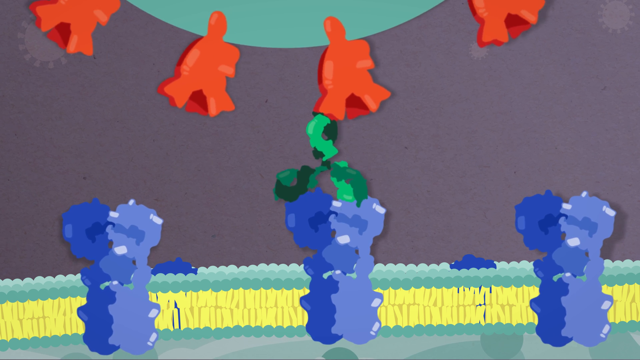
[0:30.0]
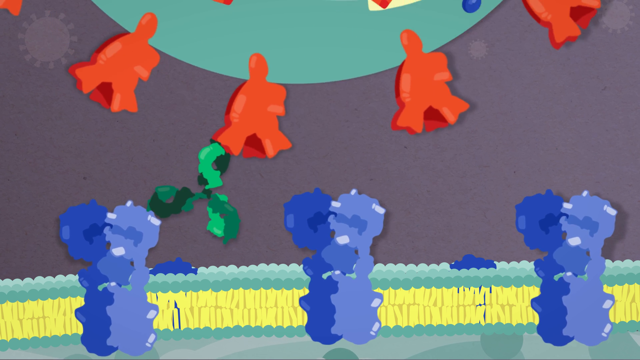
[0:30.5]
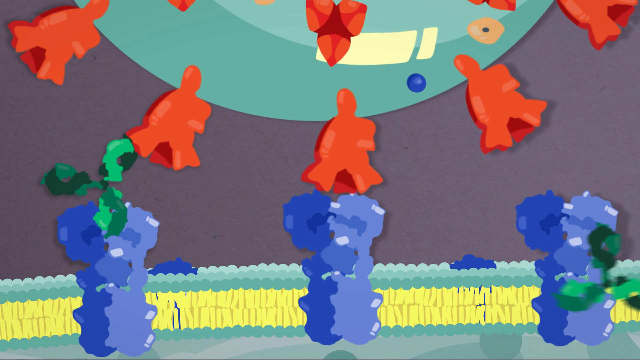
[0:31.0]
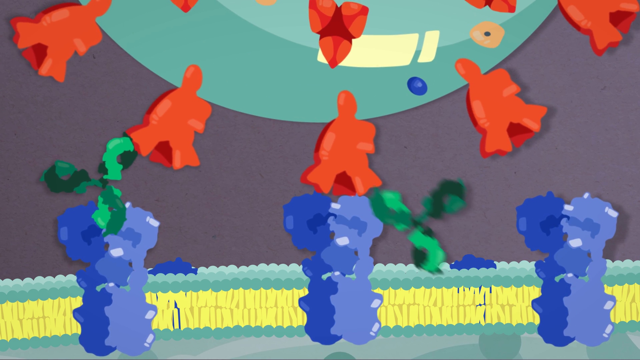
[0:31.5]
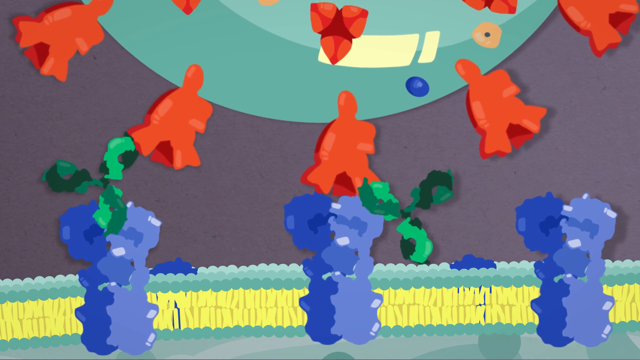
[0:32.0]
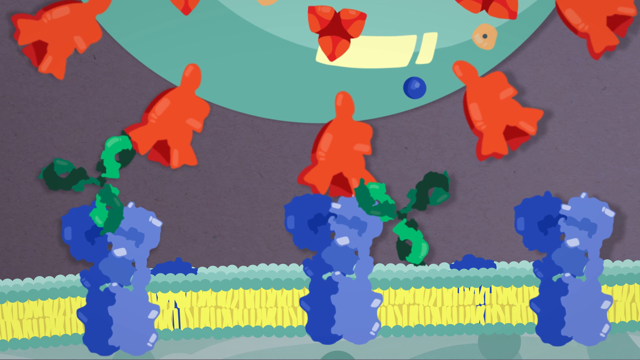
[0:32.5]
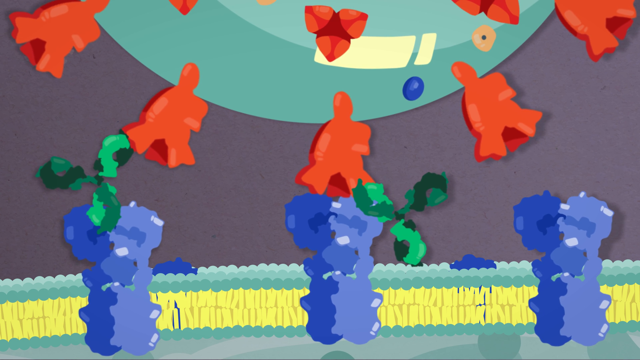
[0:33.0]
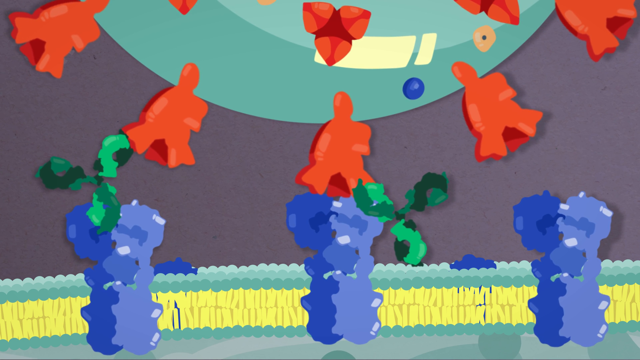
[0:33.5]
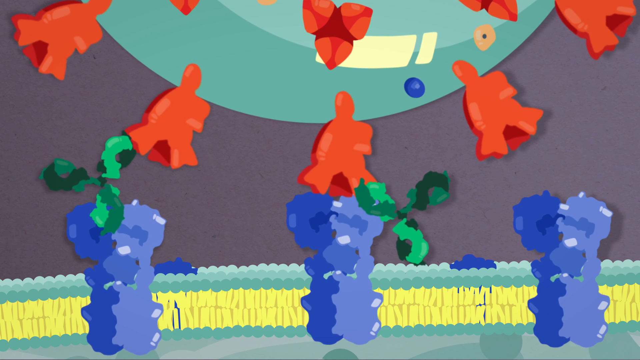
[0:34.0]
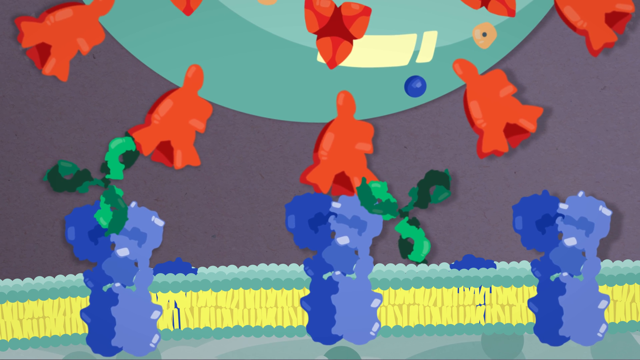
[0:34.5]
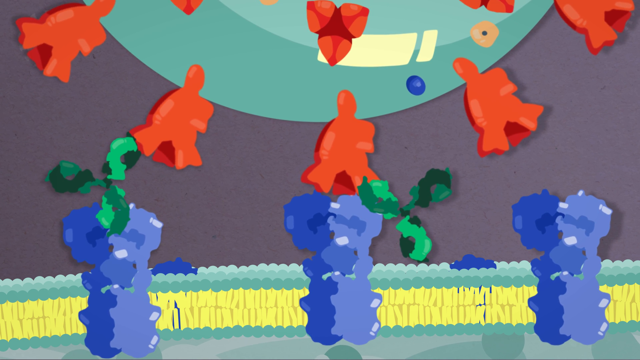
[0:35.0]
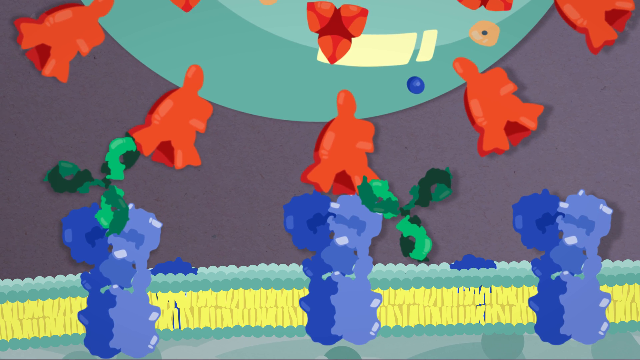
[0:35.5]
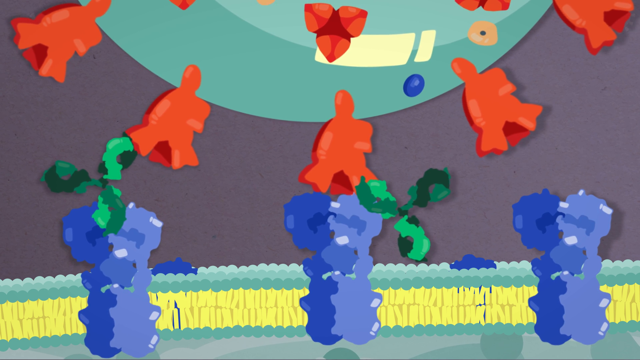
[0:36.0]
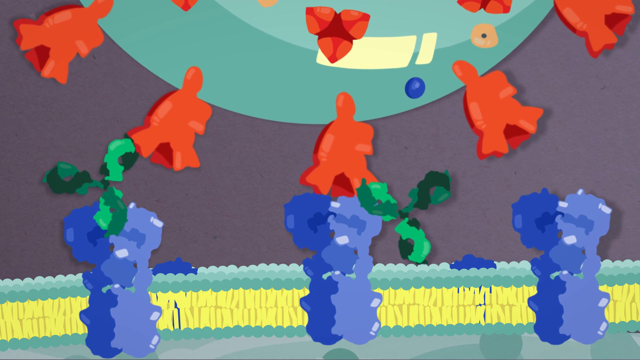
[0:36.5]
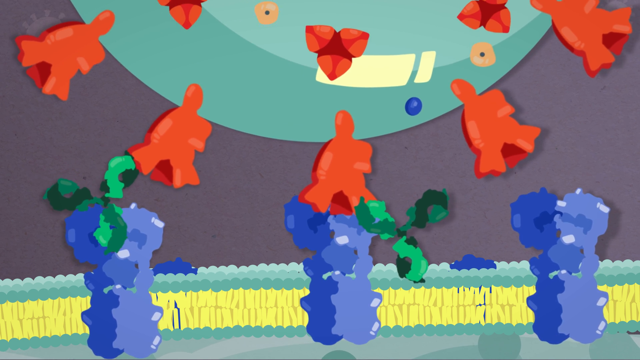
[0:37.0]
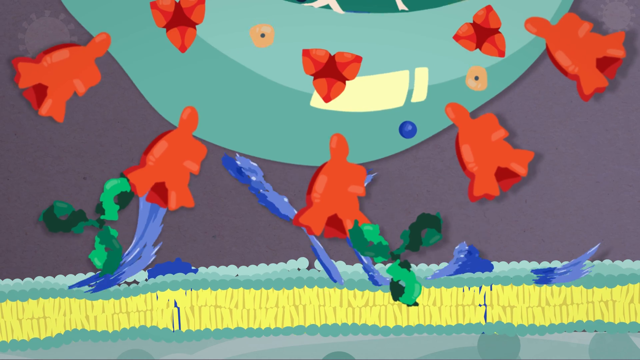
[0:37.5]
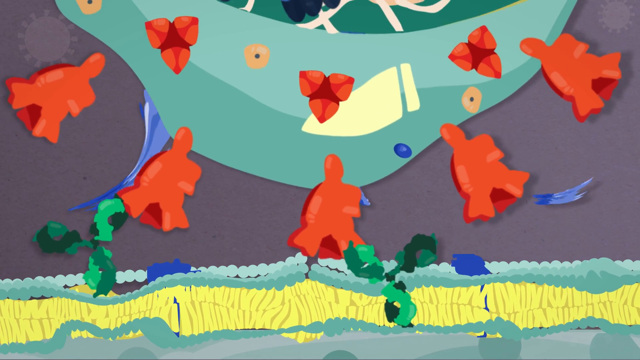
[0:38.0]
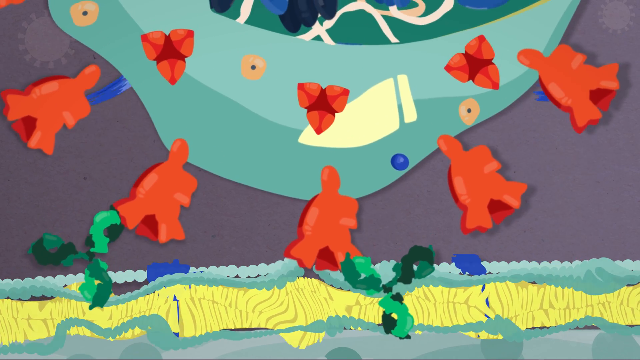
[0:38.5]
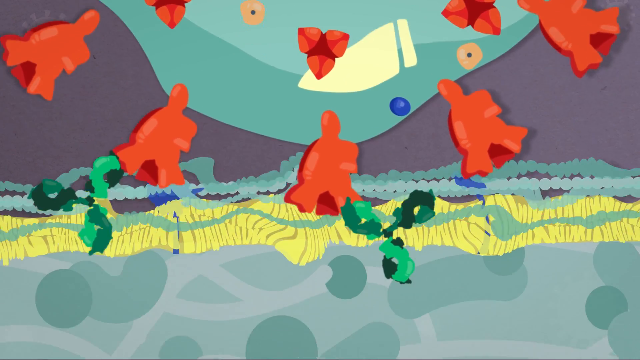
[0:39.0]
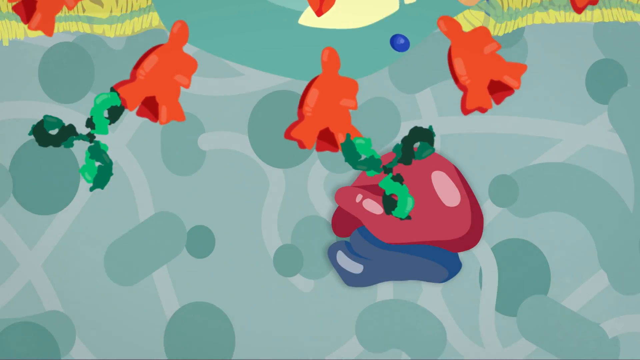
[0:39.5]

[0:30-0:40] The green and orange cell-like figure spins around as some type of green matter comes from the orange figures on the cell and goes down to the light blue and dark blue organisms. The cell then moves downward and looks like it goes under some type of clear liquid, maybe water. The background is dark purple at the top; further down it turns pale greenish in two different tones of green, and then yellow.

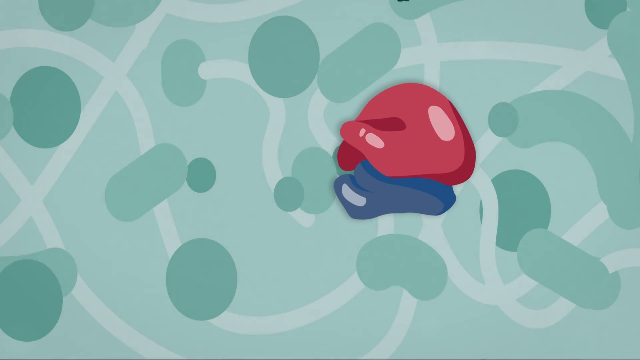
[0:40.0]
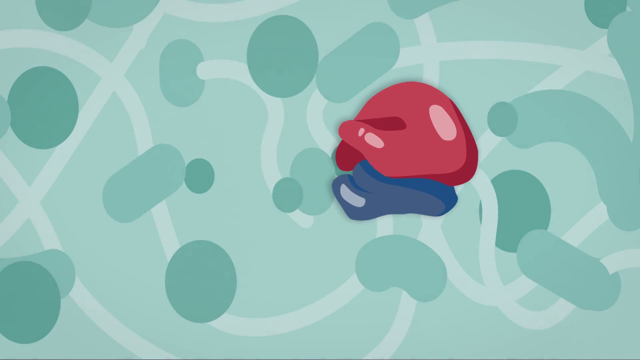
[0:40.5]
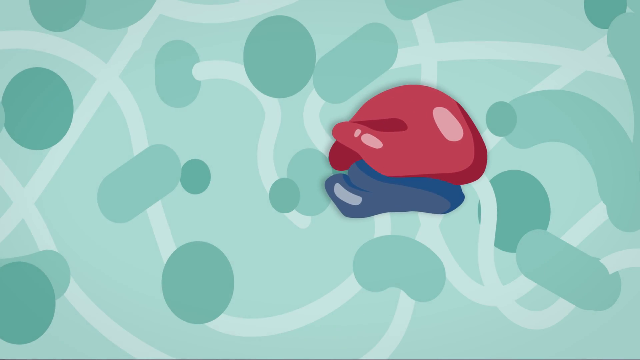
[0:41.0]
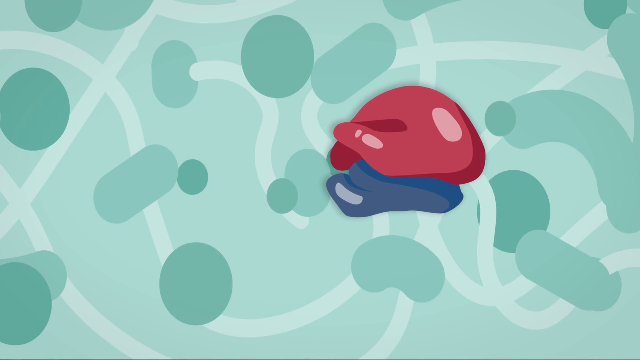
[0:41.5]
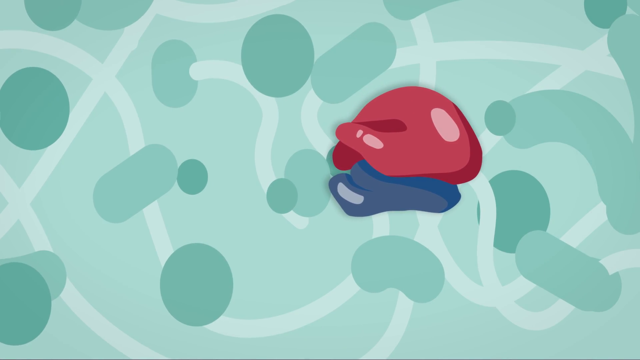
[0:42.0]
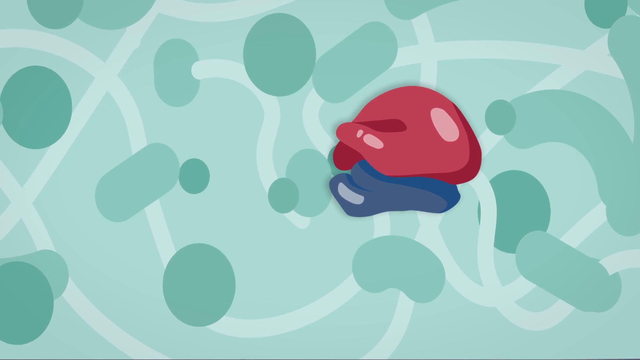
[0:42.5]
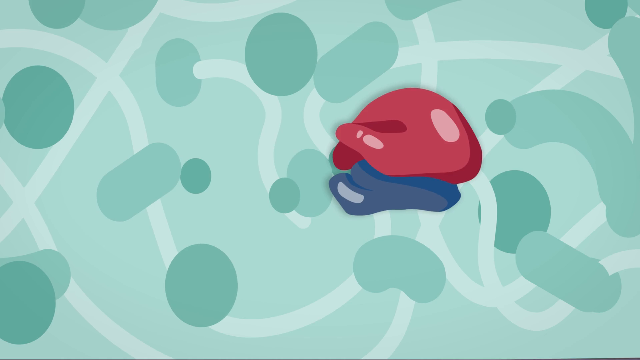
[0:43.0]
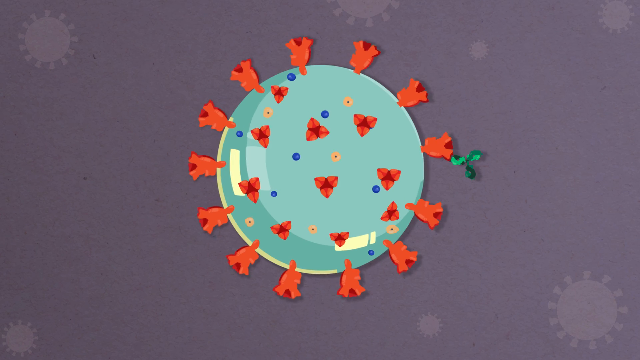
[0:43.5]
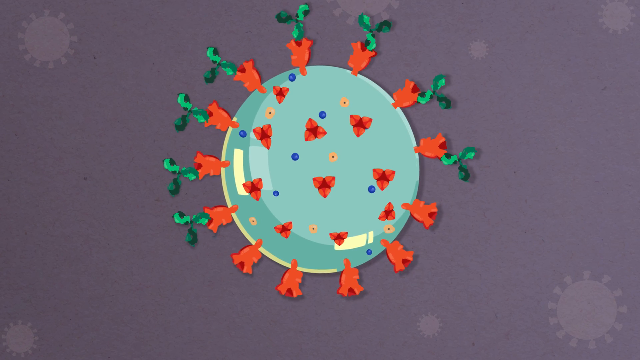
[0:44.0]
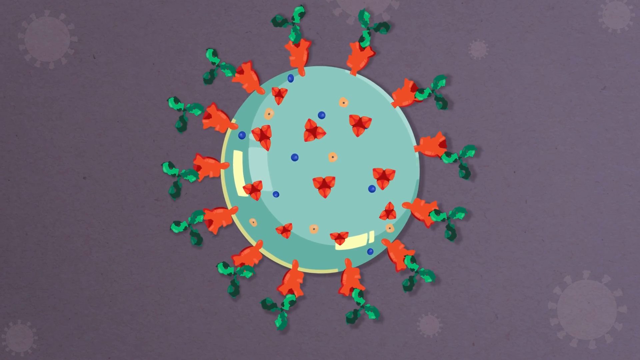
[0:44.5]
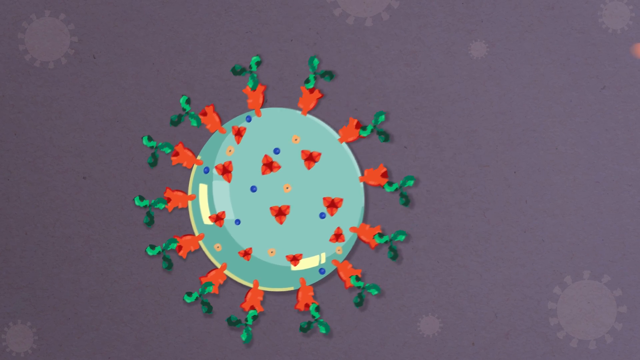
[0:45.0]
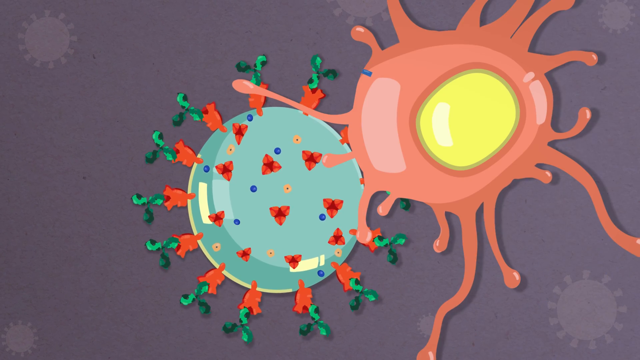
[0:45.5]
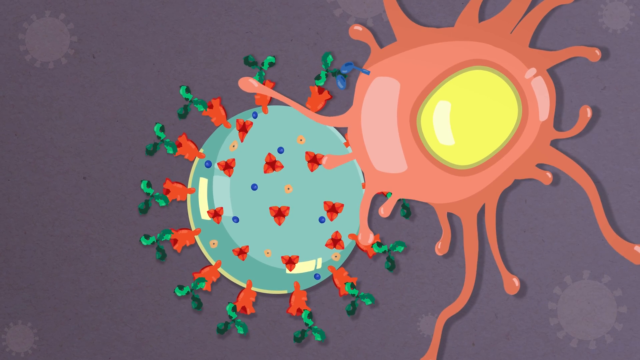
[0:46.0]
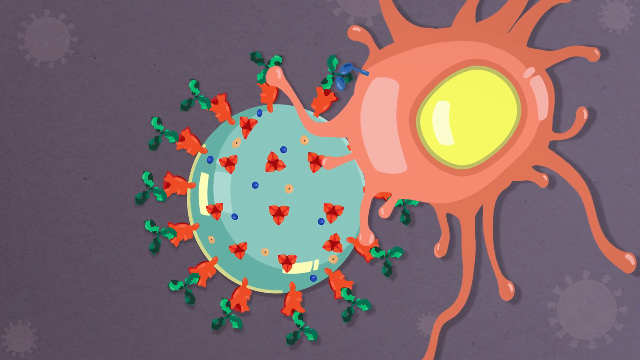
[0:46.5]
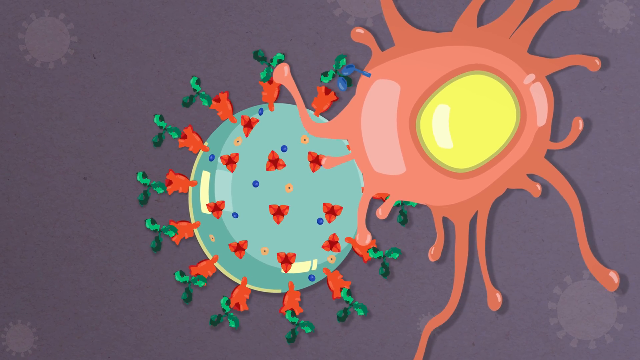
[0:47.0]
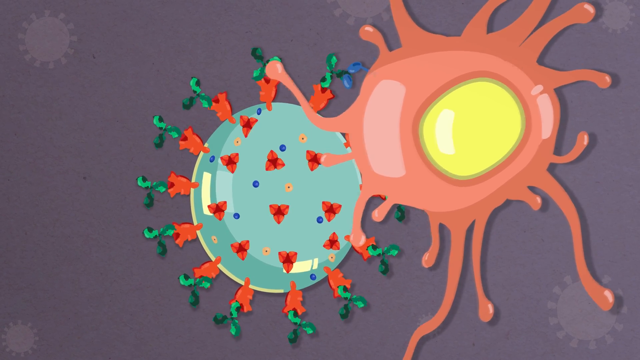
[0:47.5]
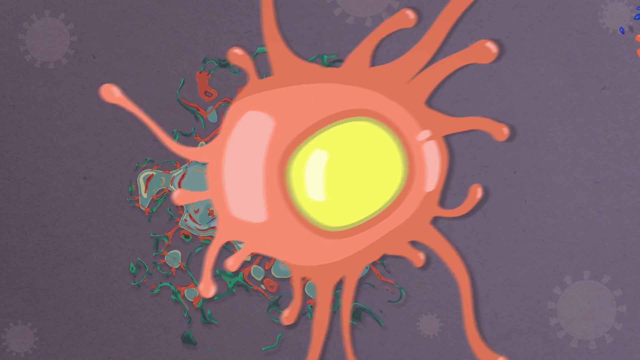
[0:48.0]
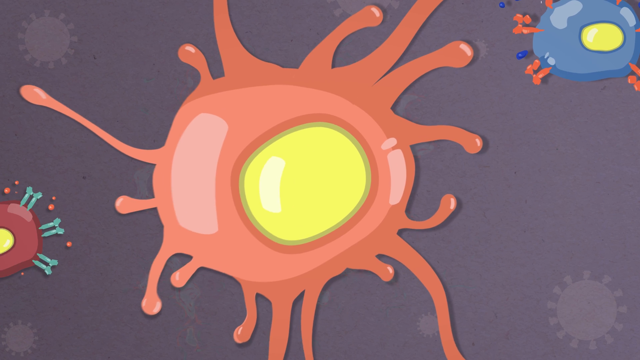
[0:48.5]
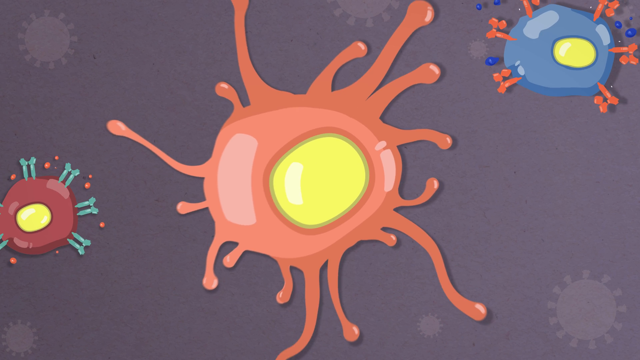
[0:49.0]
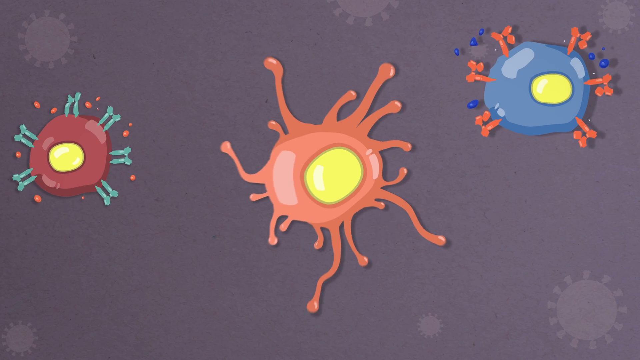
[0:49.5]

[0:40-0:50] Two blob-like figures appear on the screen: one is a red-pinkish color, and one right beneath it is blue. The background is green, with very pale green squiggly lines and darker green circles and oval shapes. The next screen shows the green cell once again, with the orange figures coming from it and green coming from the orange; it seems to have multiplied in number. The background of this slide is dark purple.